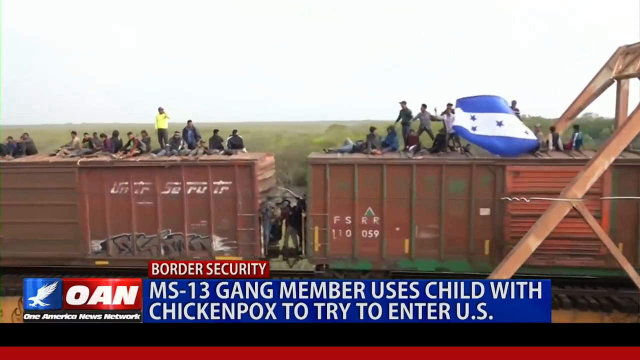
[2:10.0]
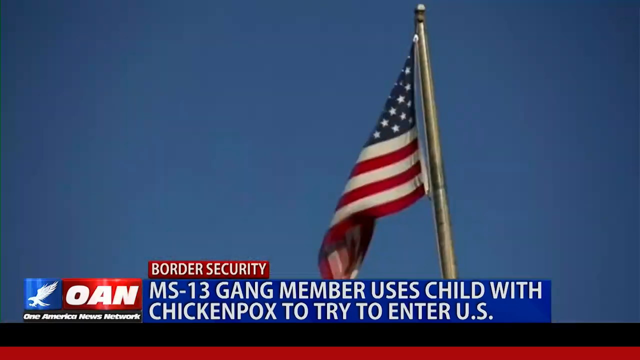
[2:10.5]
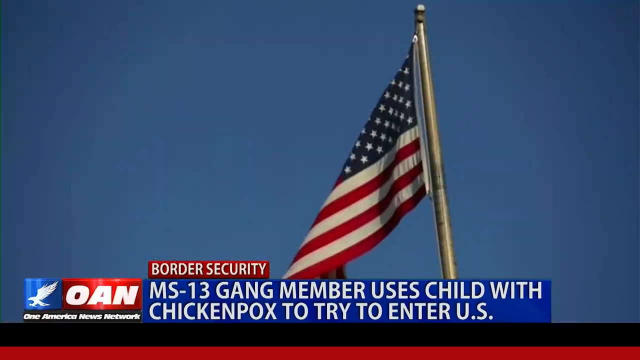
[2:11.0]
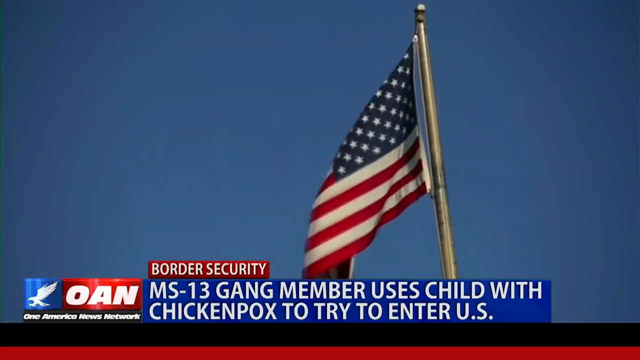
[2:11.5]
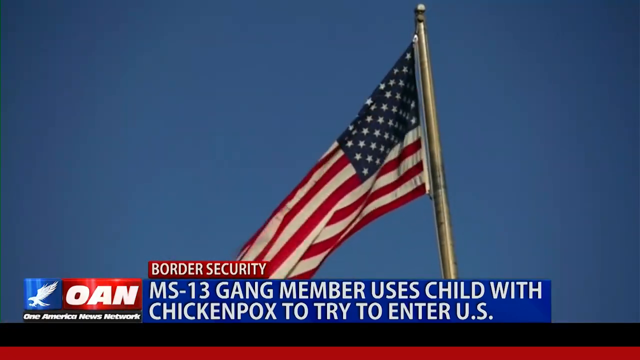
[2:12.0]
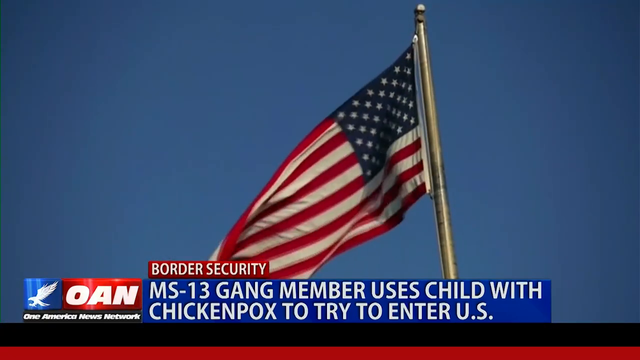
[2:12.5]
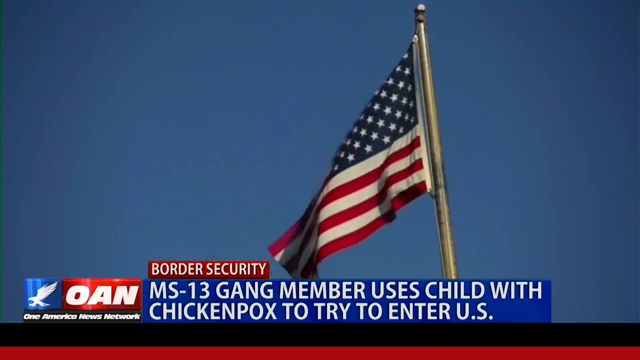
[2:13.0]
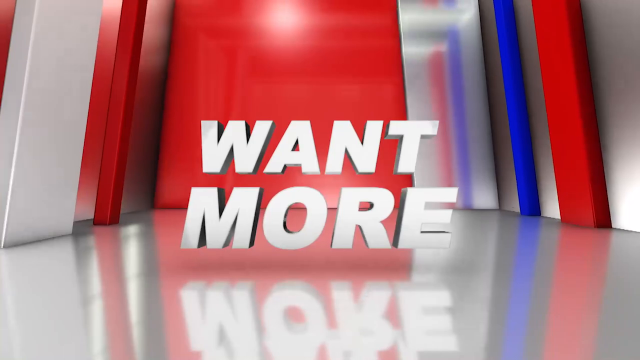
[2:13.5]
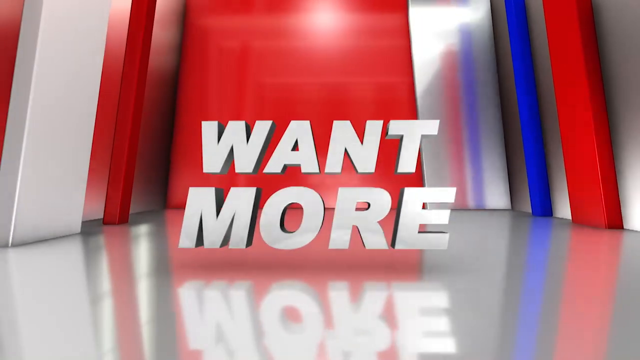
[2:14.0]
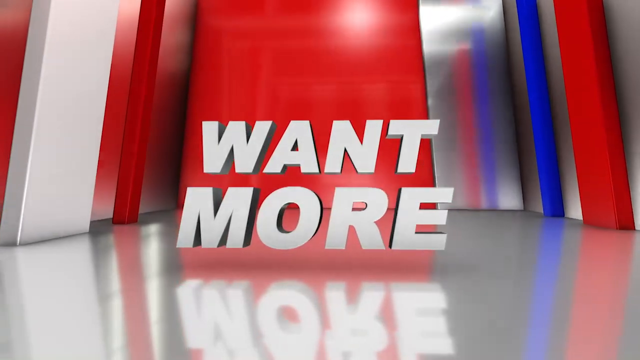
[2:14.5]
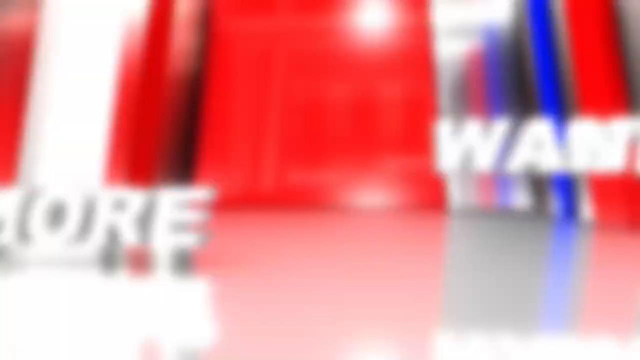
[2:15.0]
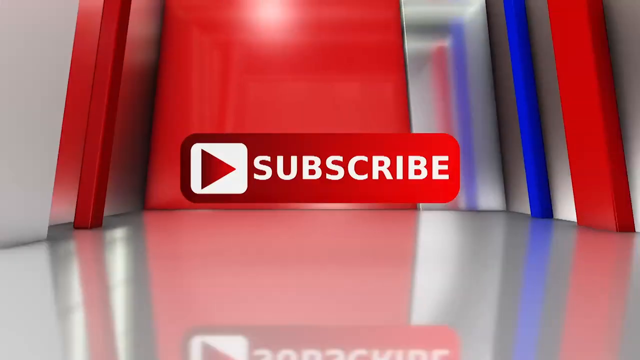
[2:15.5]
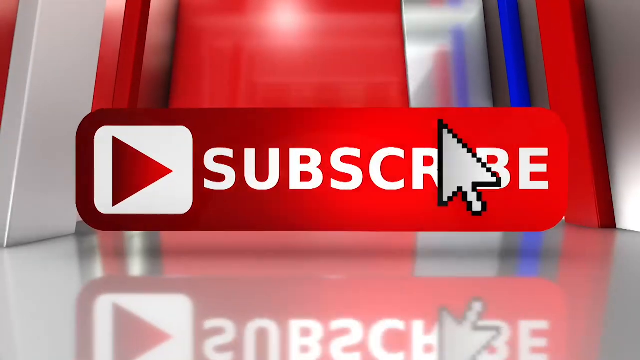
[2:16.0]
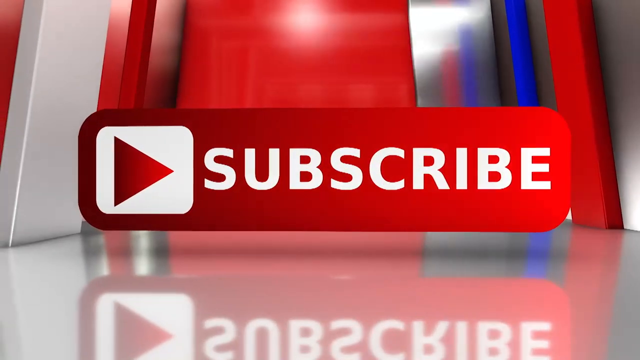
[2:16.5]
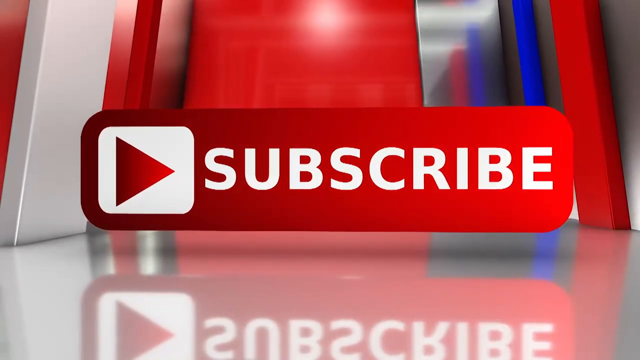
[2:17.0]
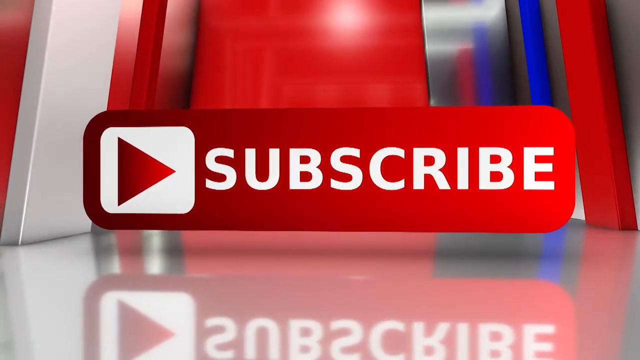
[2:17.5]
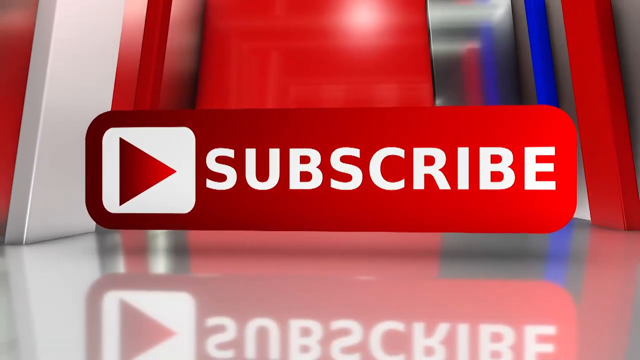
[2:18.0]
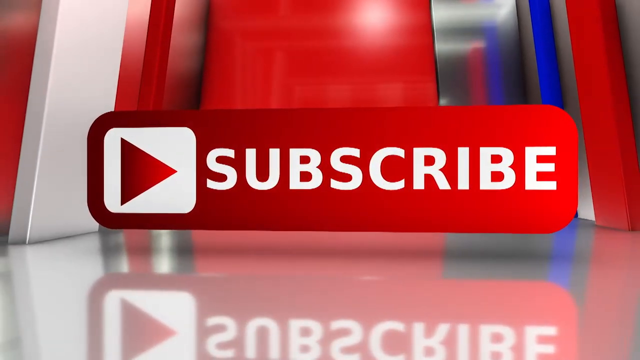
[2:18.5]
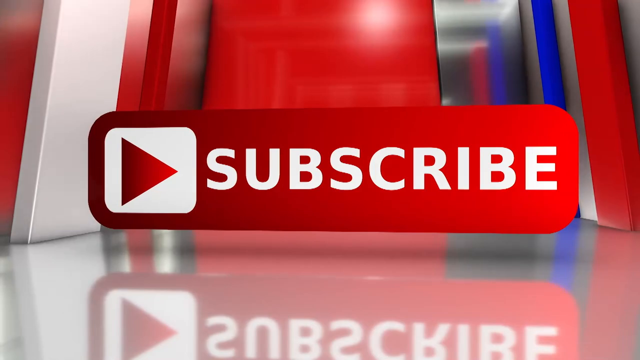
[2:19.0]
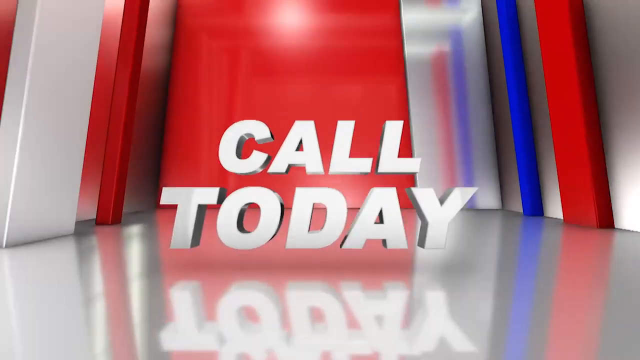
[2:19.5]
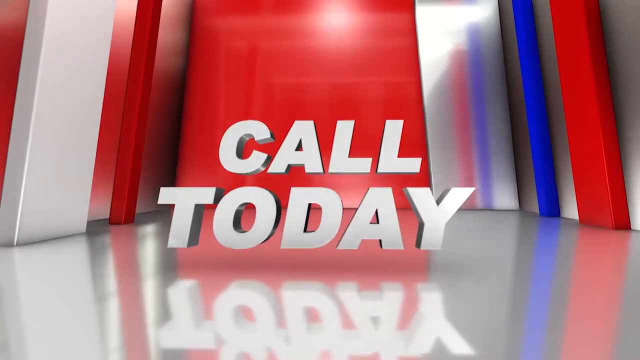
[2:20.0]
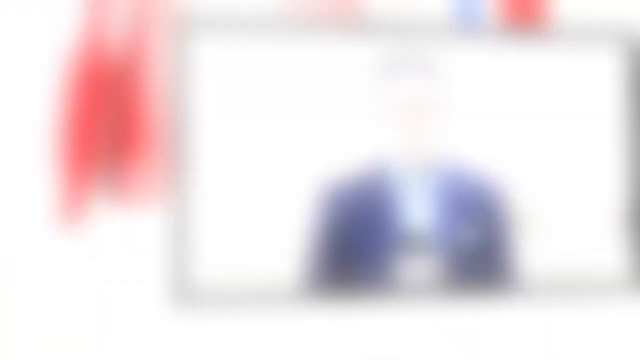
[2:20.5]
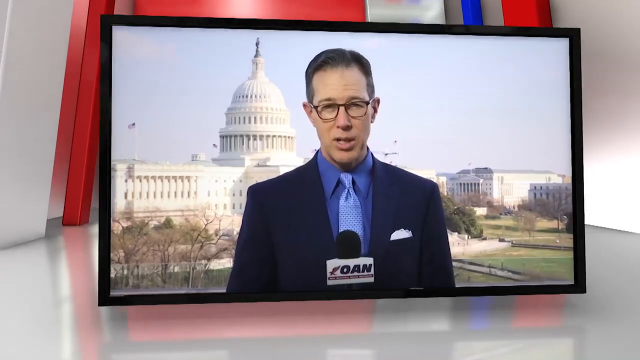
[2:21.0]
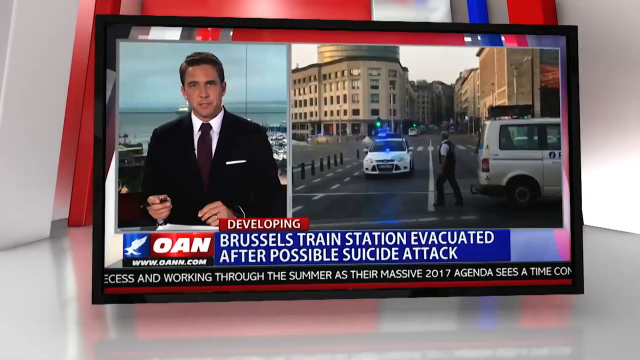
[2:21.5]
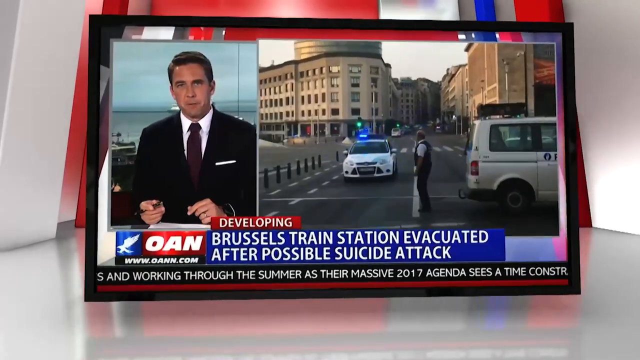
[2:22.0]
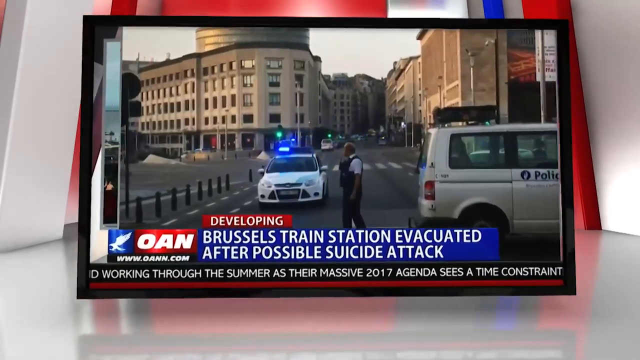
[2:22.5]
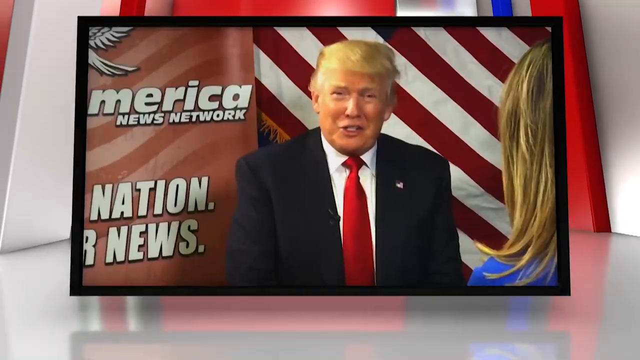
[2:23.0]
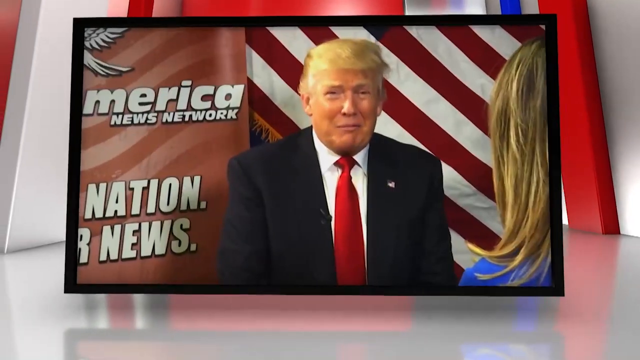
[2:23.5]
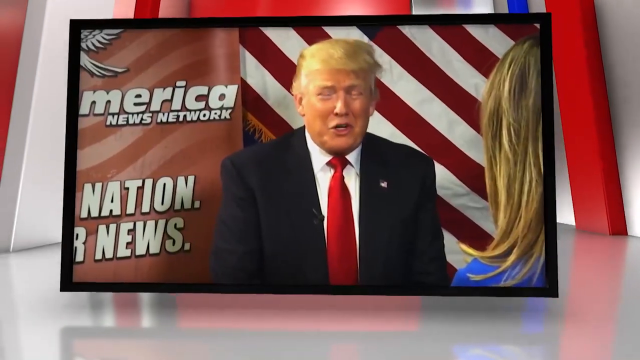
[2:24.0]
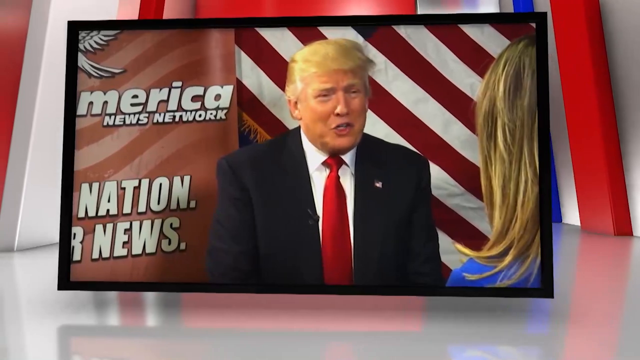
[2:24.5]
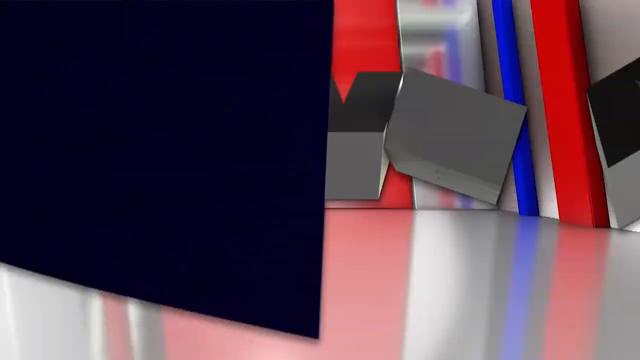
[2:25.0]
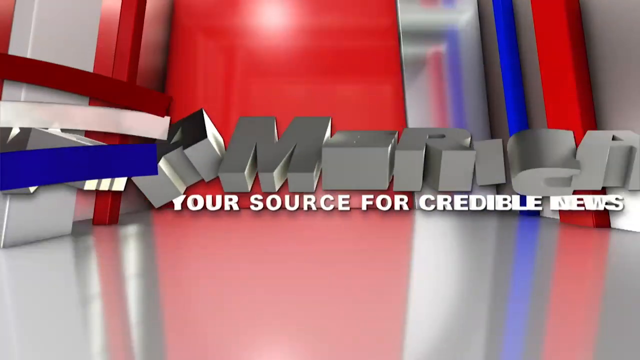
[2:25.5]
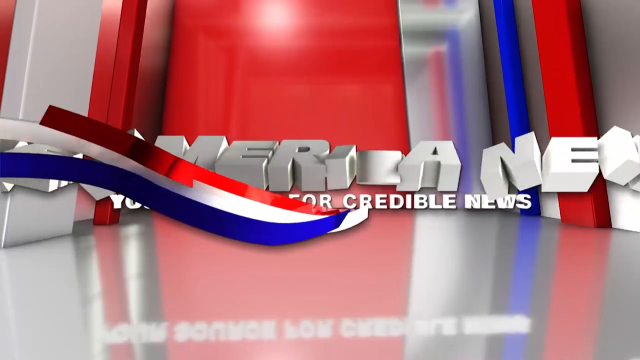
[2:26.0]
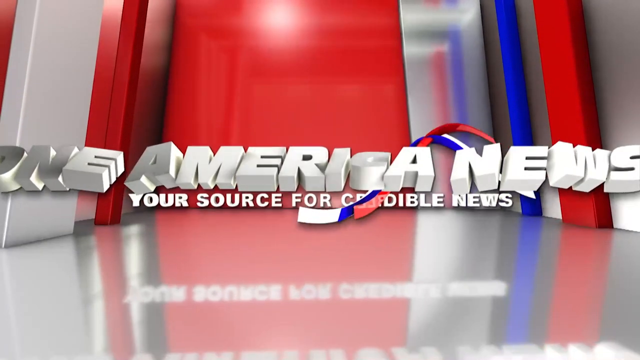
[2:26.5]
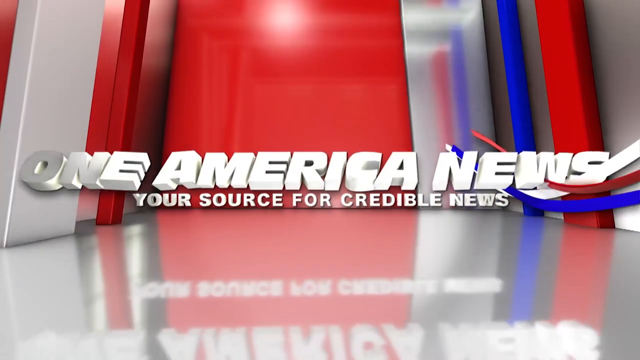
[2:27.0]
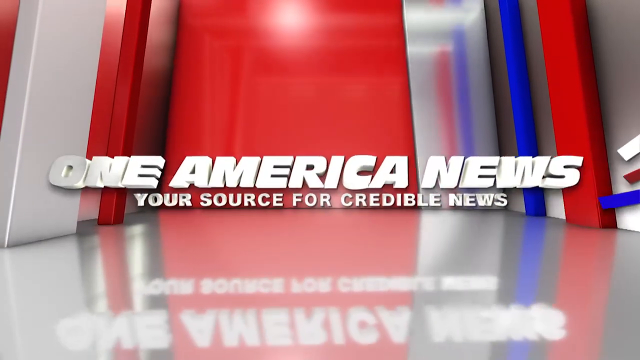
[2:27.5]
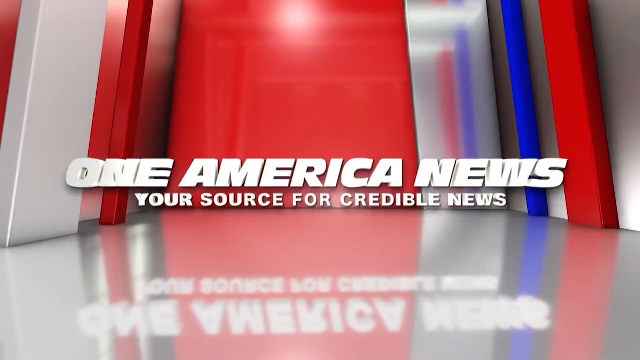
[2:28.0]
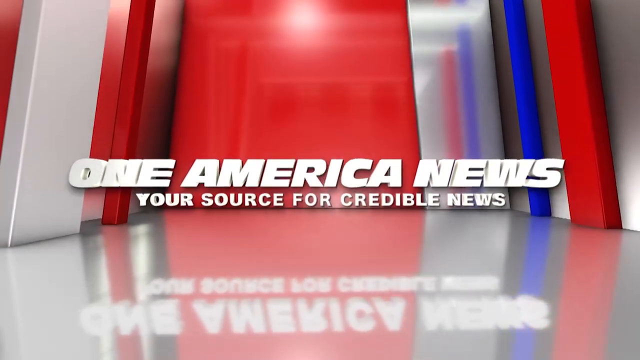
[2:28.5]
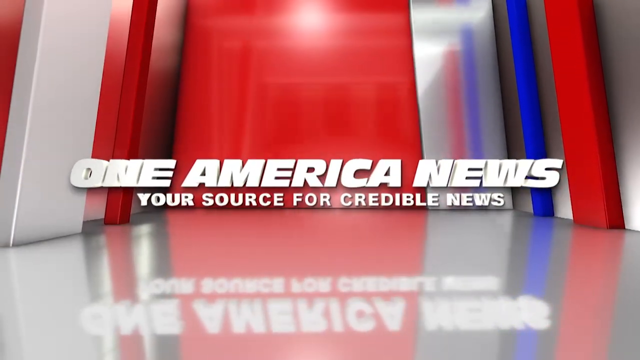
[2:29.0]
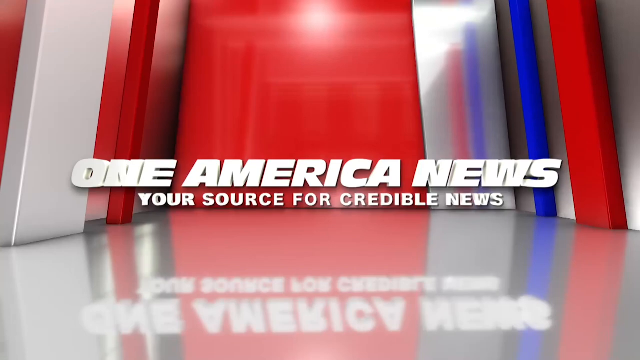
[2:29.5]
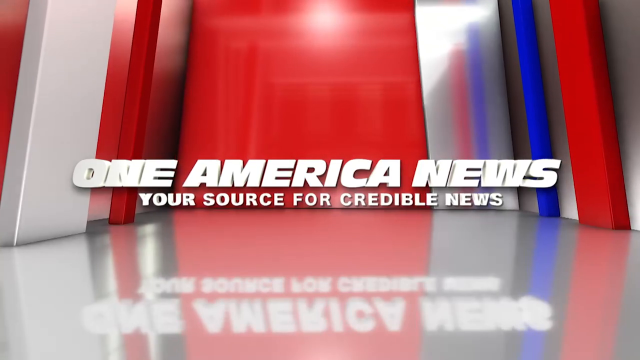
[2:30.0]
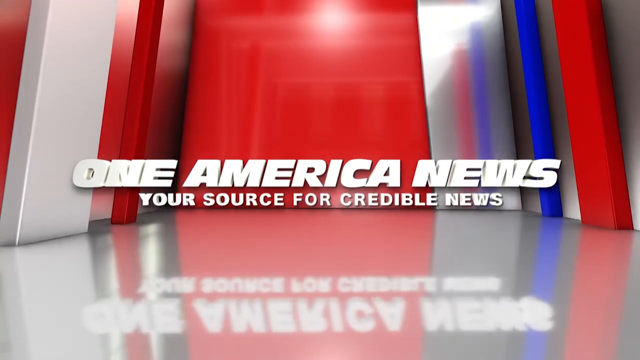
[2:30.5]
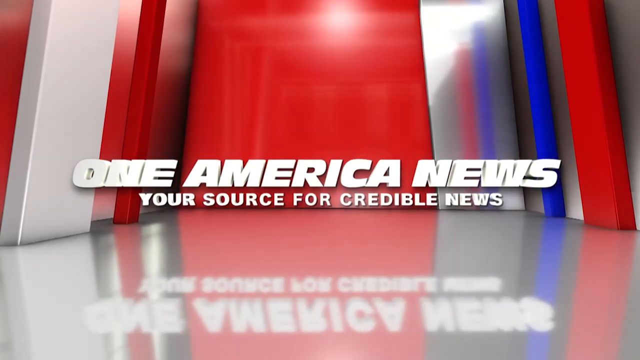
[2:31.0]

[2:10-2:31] A quick shot of the train is followed by a flag and the text "want more subscribe" and "called today". Brussels is shown, then President Trump, and then "One American news" with "your source for credible news", apparently what OAN stands for.